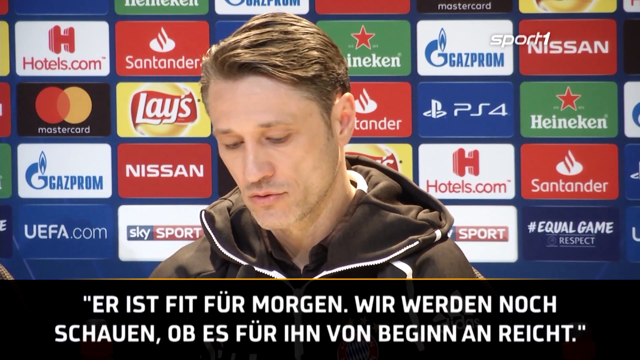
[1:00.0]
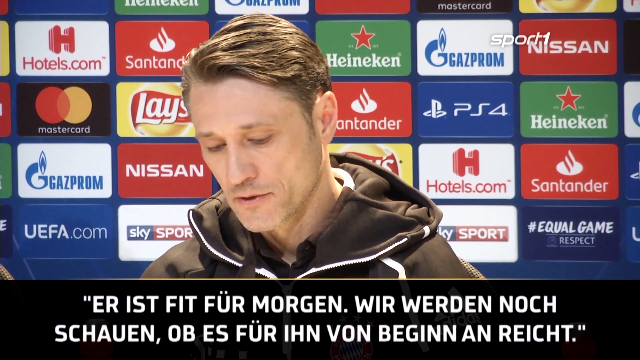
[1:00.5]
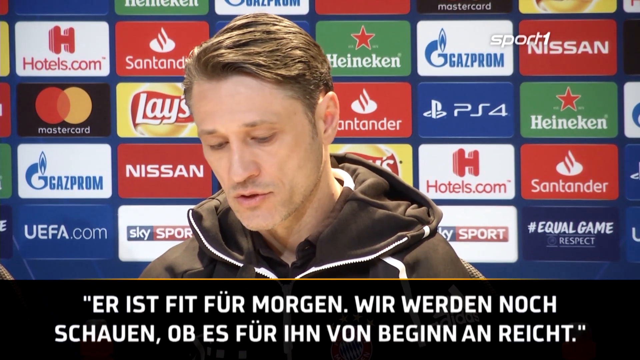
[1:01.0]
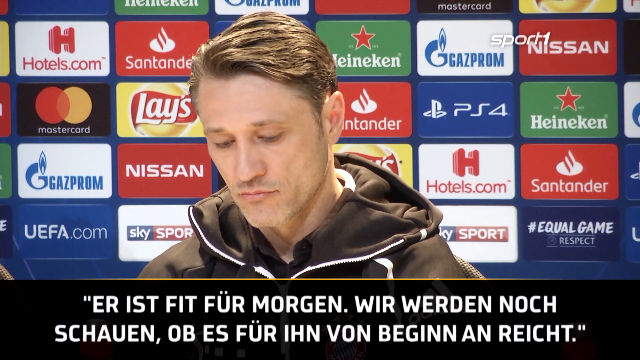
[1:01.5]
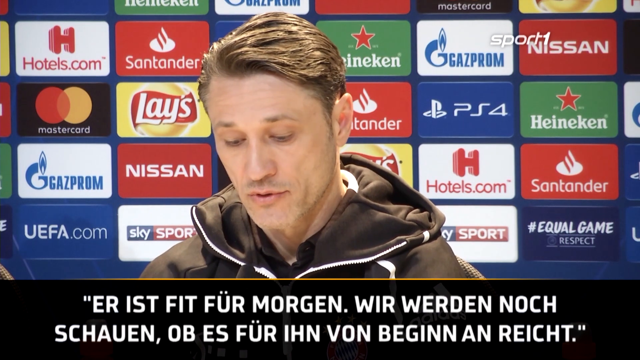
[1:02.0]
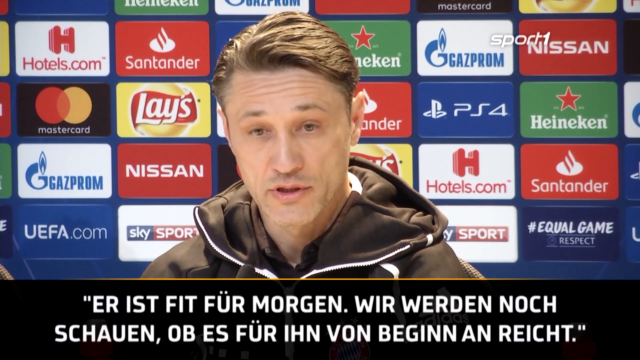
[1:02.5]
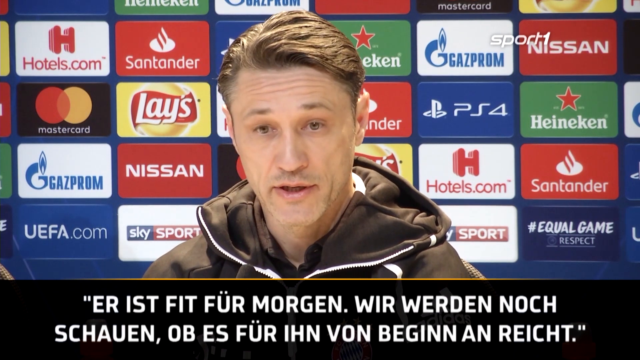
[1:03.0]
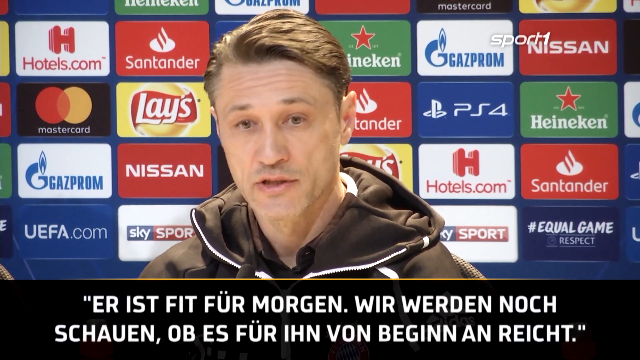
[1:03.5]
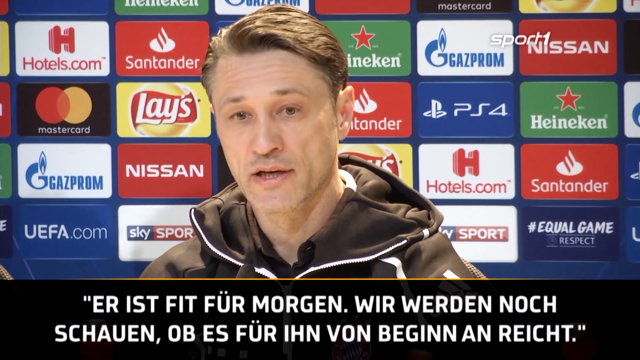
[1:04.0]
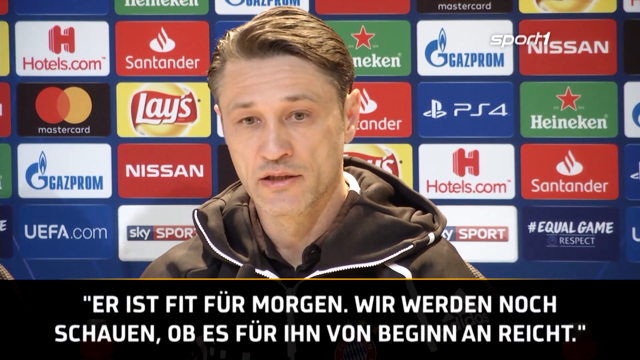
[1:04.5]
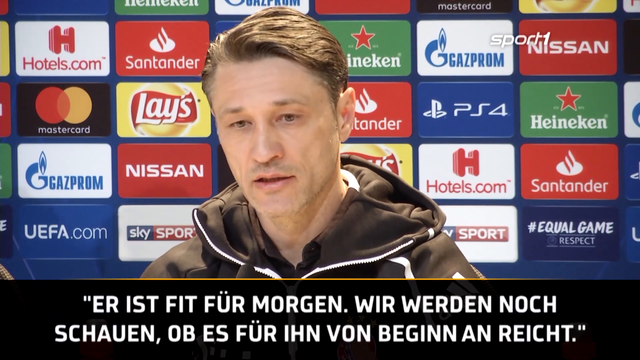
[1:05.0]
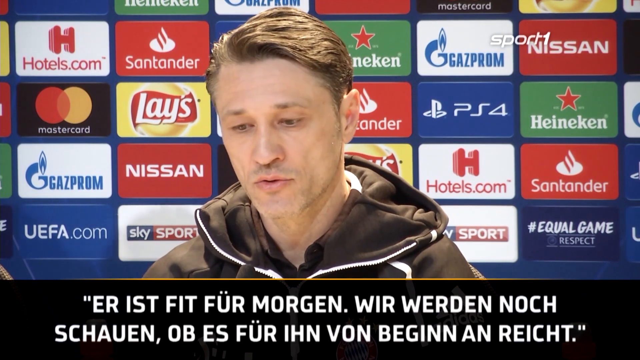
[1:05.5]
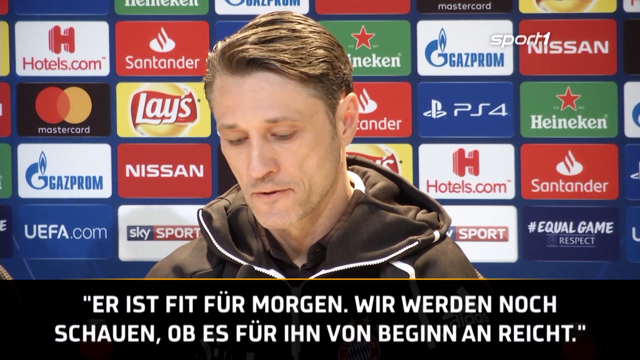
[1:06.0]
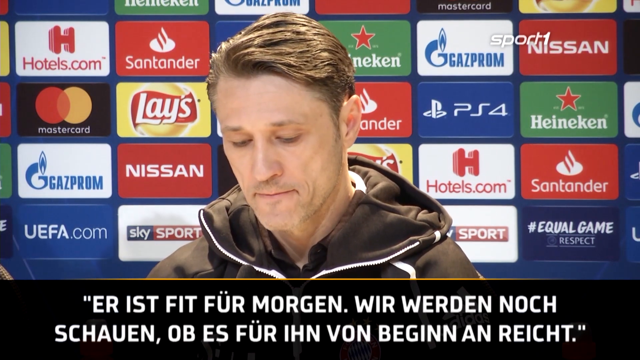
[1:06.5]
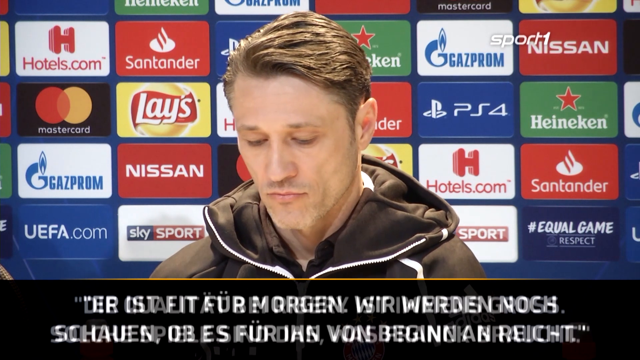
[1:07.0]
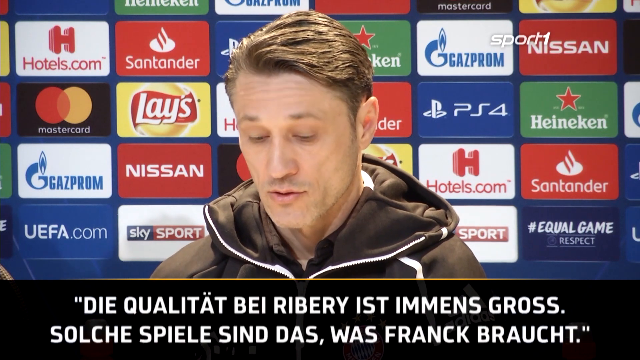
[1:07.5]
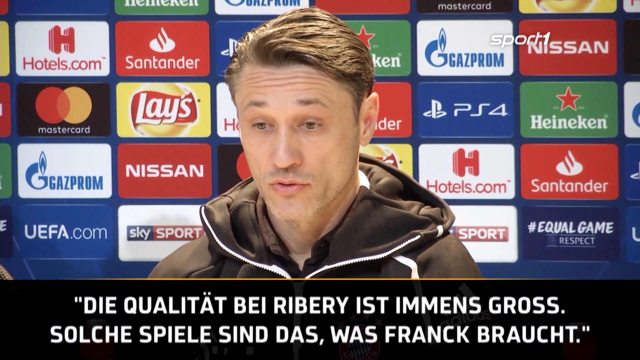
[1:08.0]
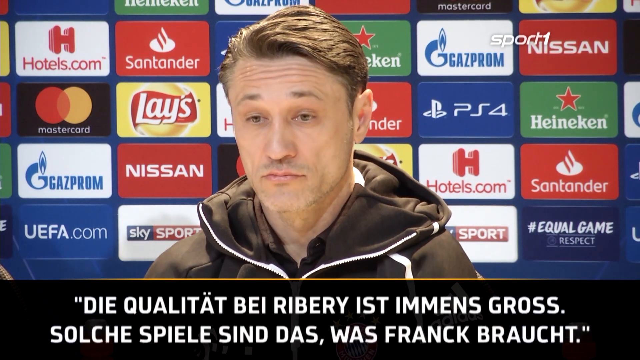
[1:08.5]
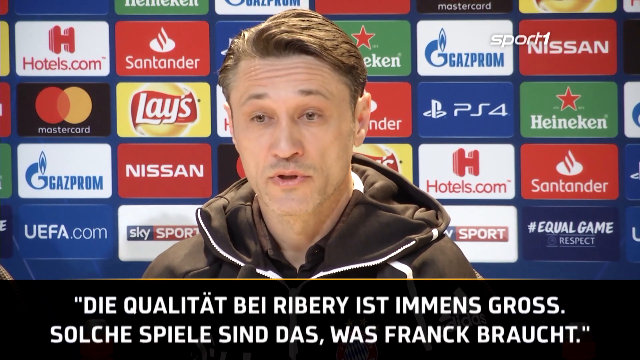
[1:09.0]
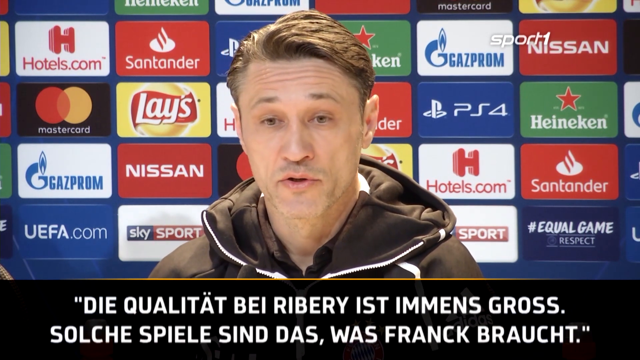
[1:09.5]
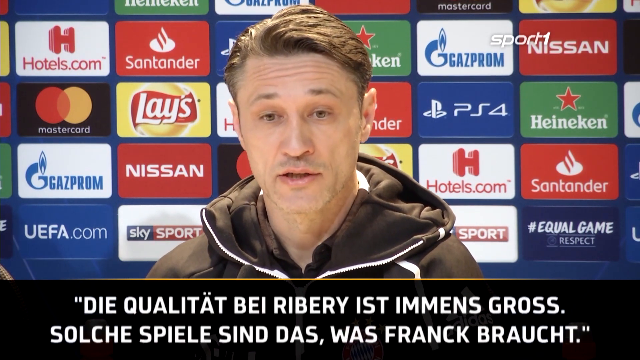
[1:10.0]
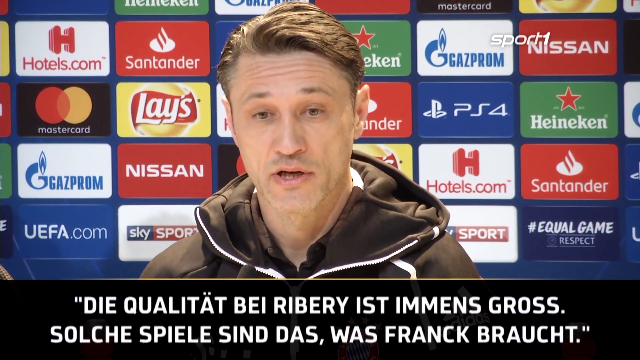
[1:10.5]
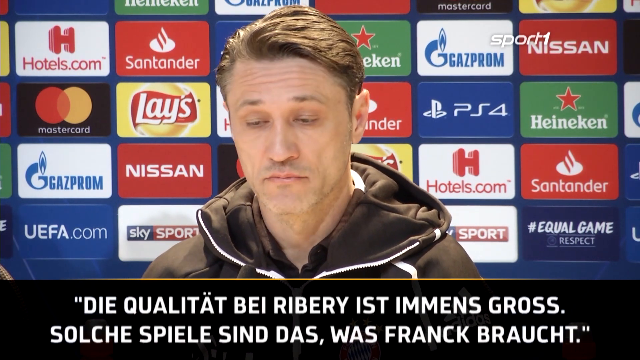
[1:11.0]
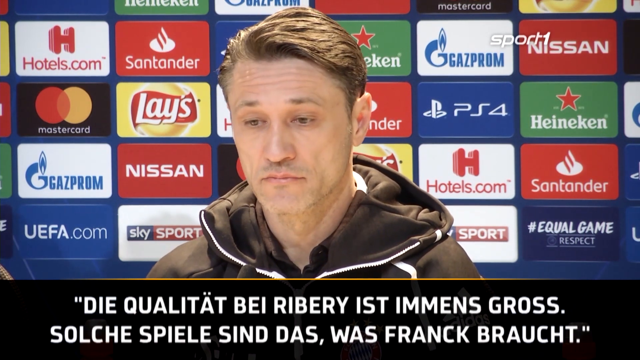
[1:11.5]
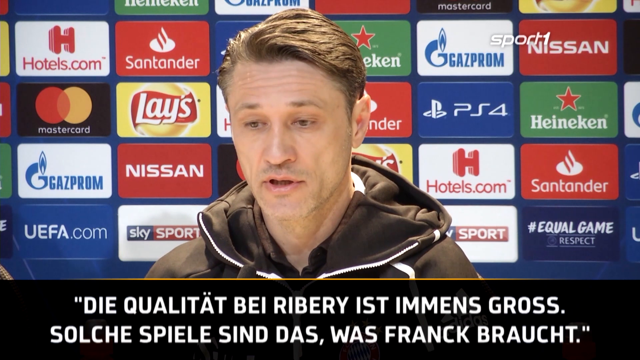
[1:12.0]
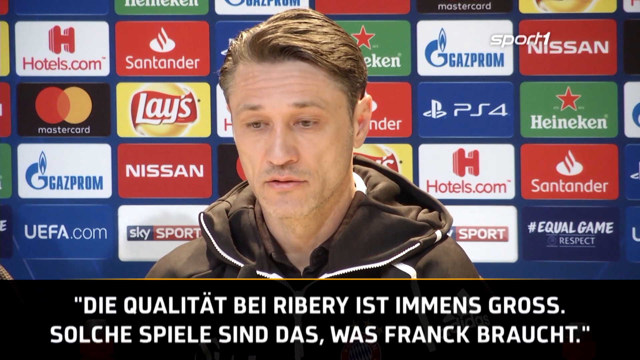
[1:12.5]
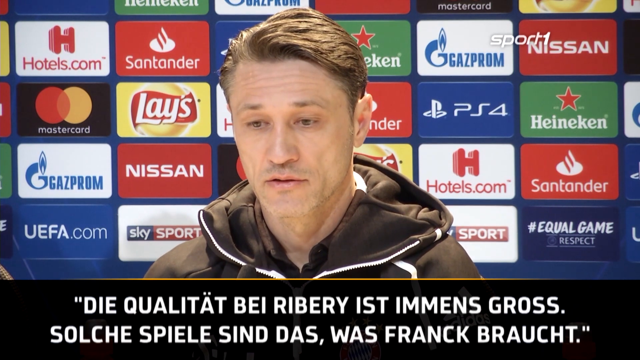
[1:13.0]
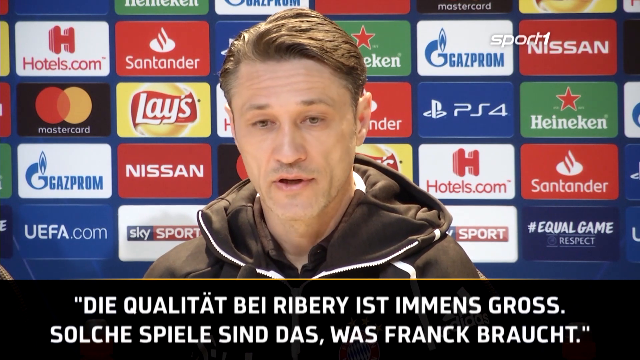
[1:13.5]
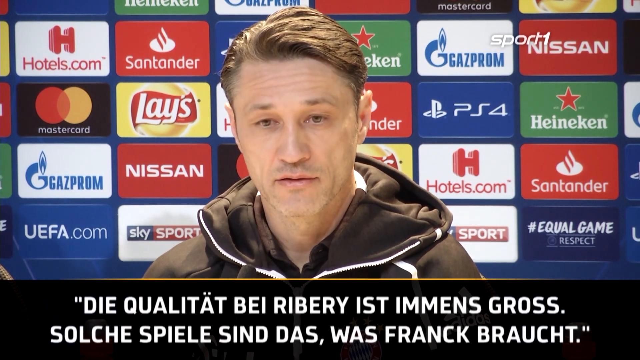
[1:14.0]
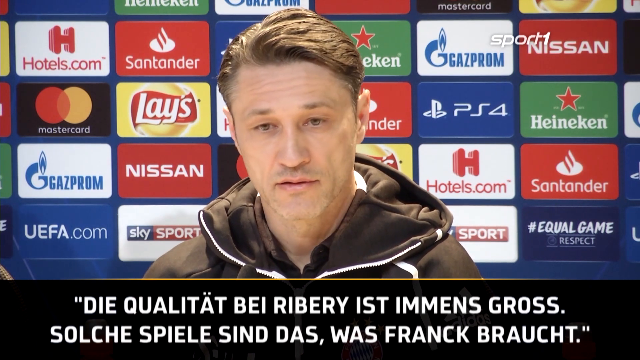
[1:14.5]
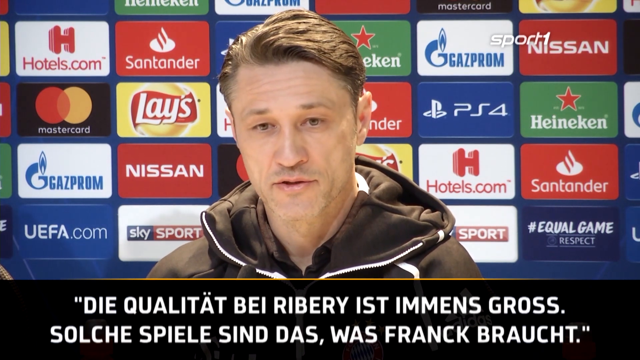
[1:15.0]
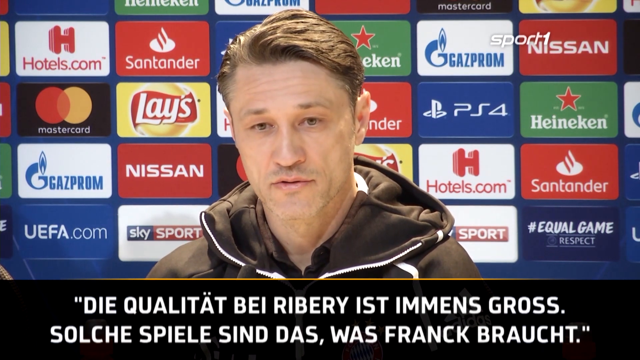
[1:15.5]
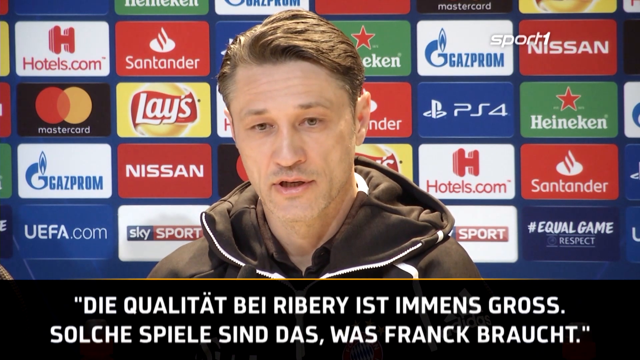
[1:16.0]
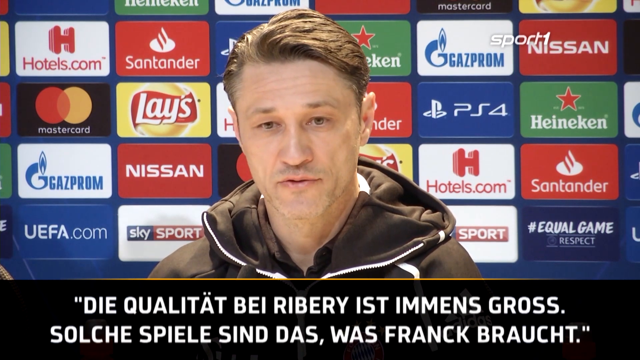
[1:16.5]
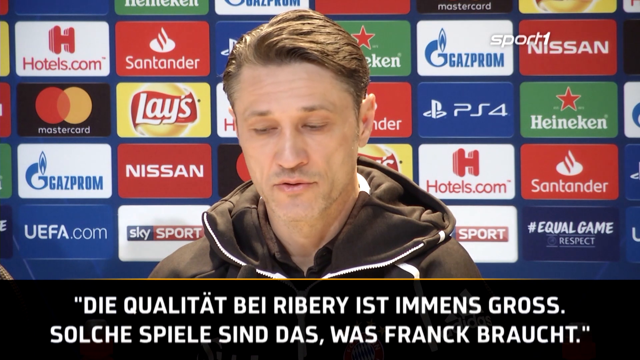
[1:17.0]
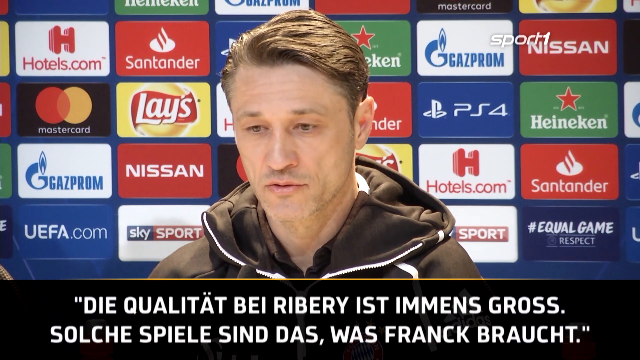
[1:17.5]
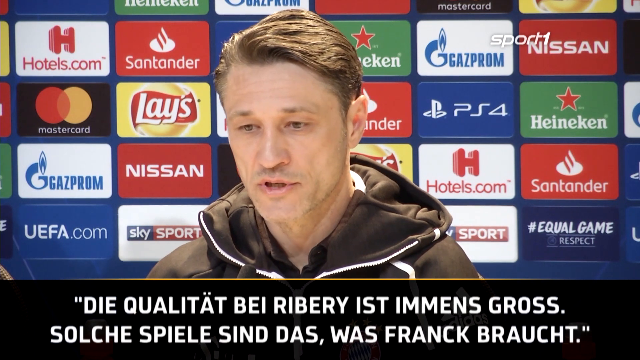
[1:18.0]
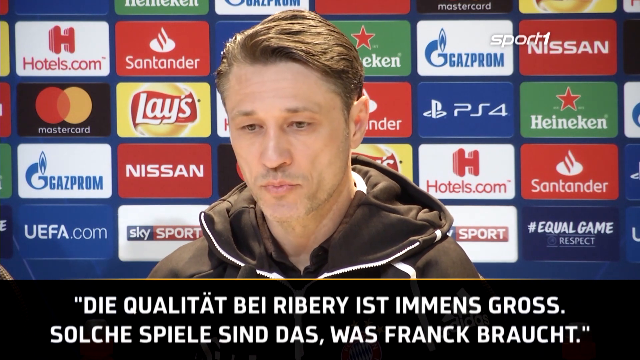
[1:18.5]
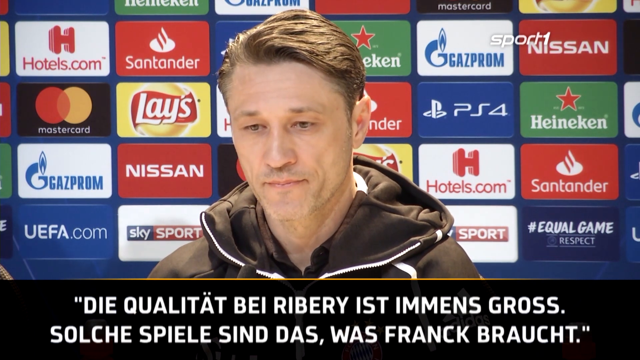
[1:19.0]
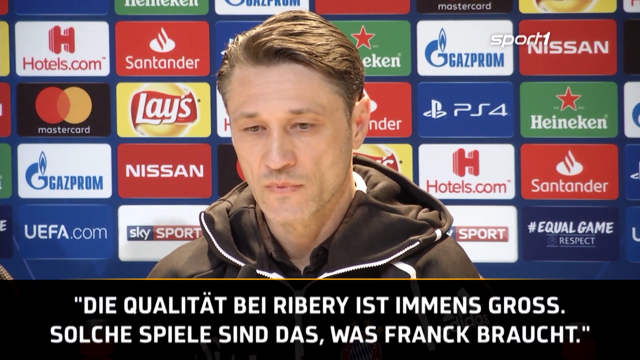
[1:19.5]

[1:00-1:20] A man in a black tracksuit with white outlining gazes downward at what appears to be a press conference after a sports game on the Sport 1 channel. He is sitting in front of a blue wall with advertisements including Nissan, Heineken, Santander, Hotels.com, PS4, Gazprom, Lays, Mastercard and Sky Sports. He has a large nose, Caucasian features, dark blonde hair, thin lips and thin eyebrows, and appears to be in very good shape. He nods and looks directly in front of him to answer a reporter, shifts his gaze back down, and then lifts his eyebrows to answer something, appearing to be in deep thought. What appears to be a German transcription at the bottom changes according to what he is saying. At the end he gazes toward the bottom again.